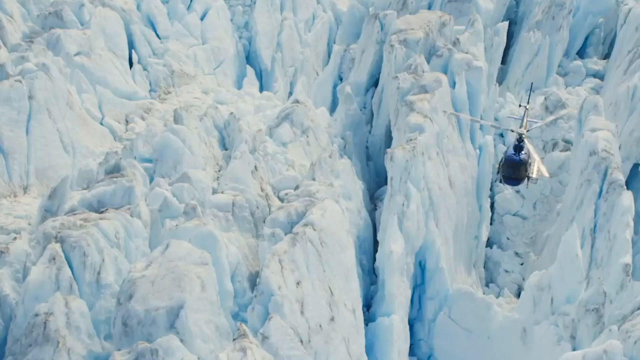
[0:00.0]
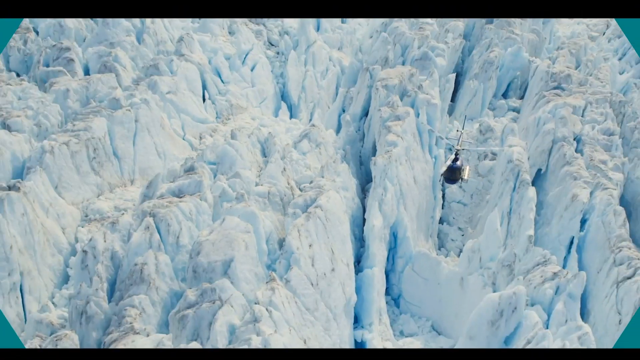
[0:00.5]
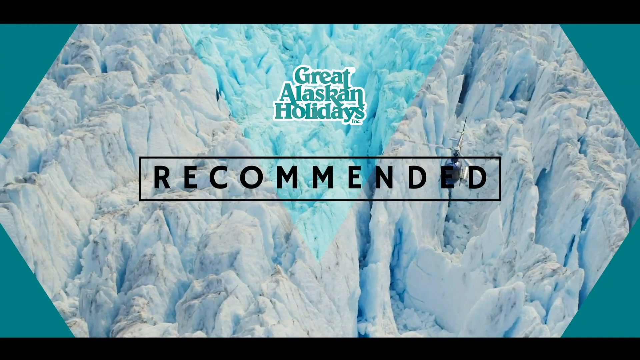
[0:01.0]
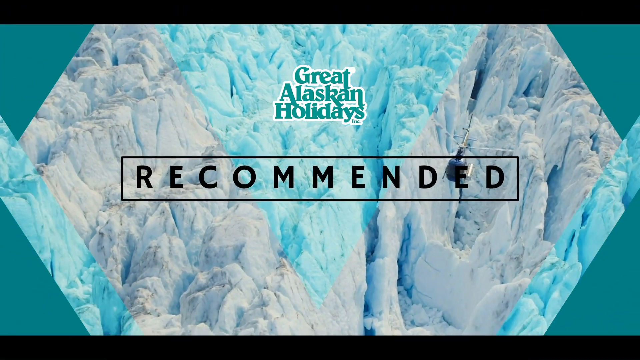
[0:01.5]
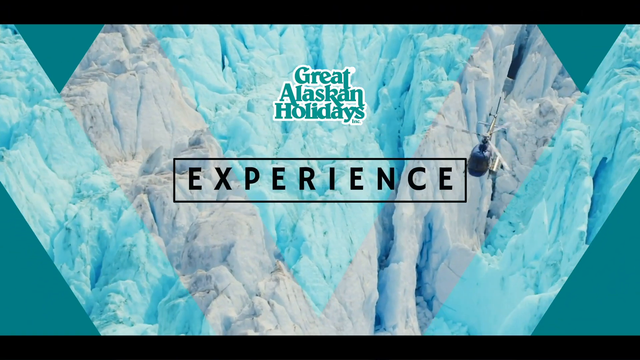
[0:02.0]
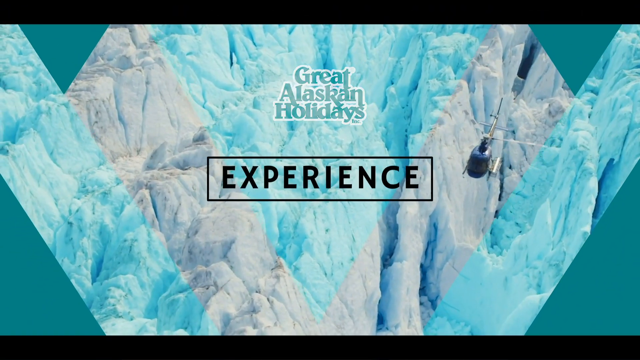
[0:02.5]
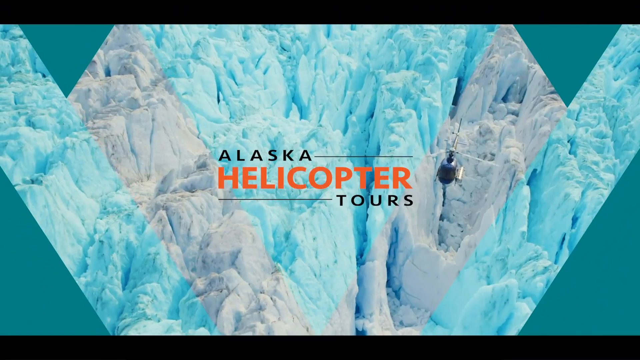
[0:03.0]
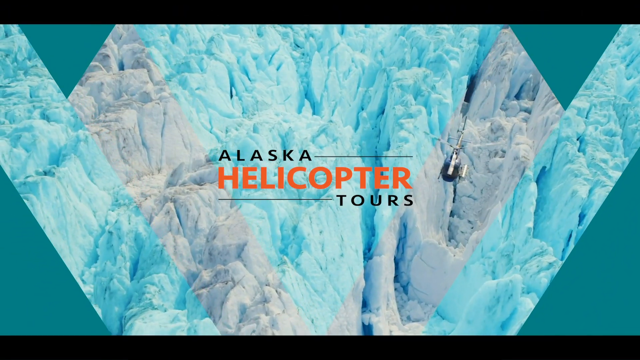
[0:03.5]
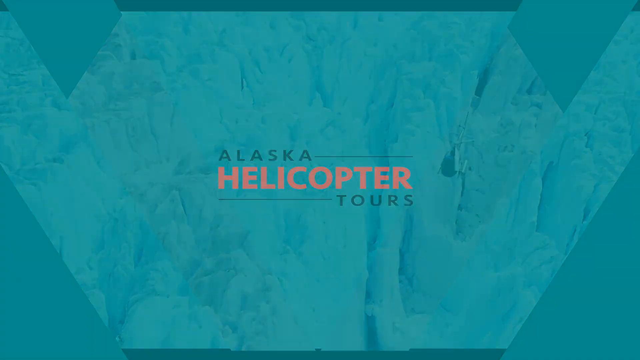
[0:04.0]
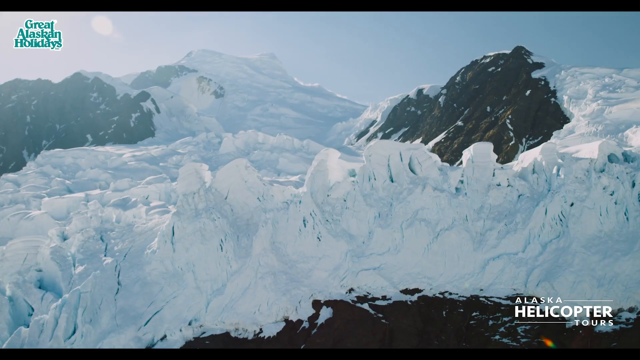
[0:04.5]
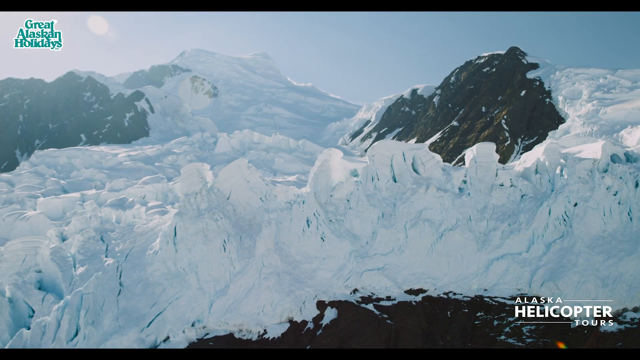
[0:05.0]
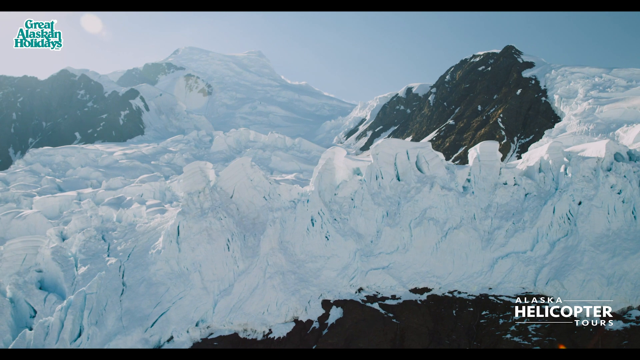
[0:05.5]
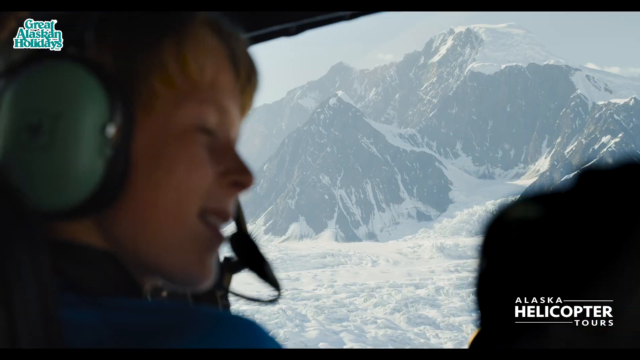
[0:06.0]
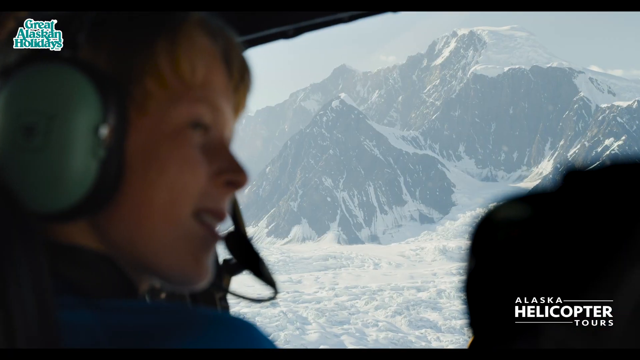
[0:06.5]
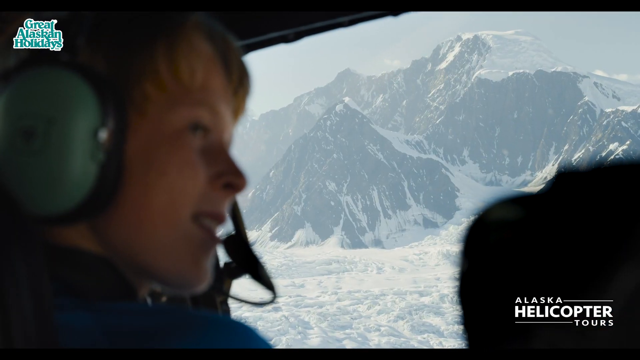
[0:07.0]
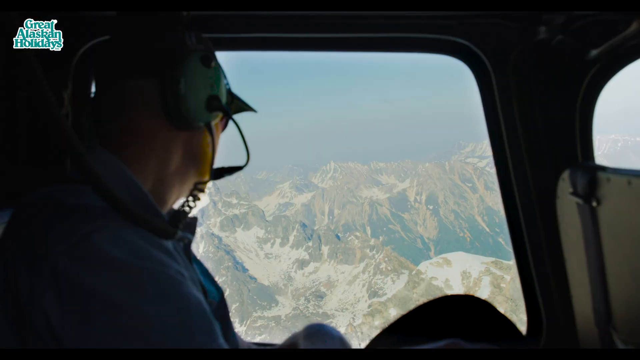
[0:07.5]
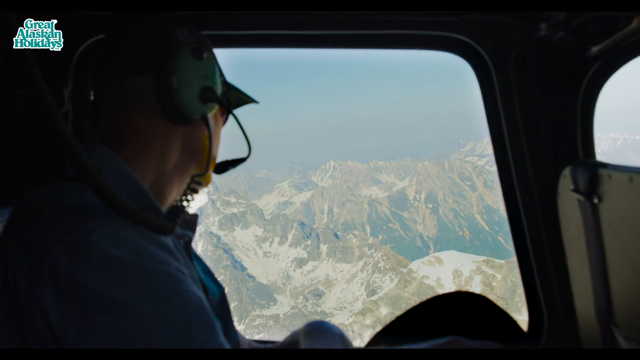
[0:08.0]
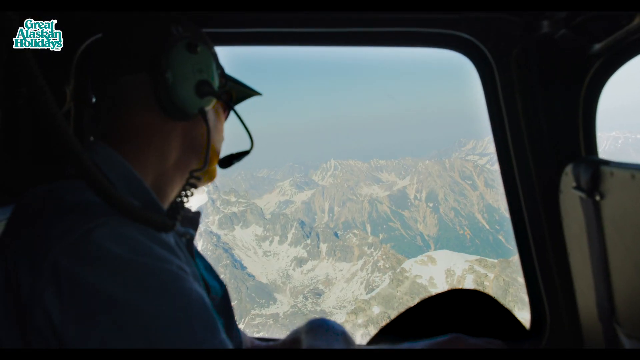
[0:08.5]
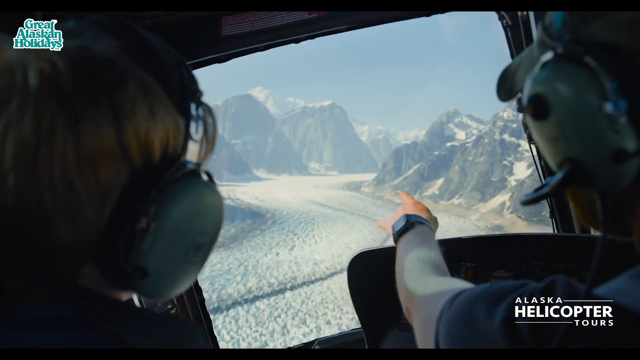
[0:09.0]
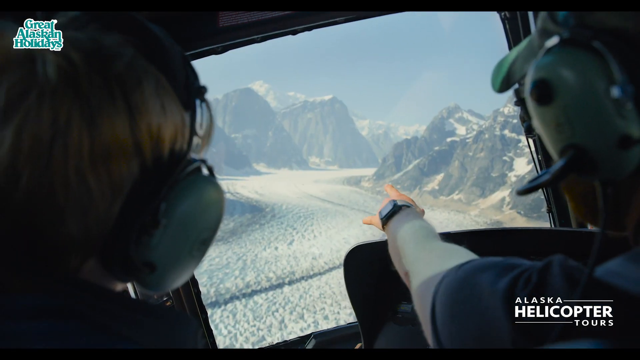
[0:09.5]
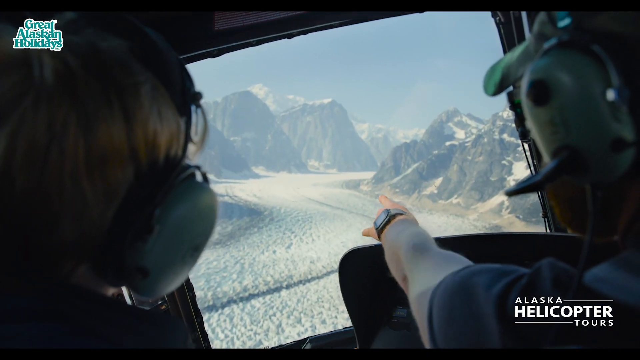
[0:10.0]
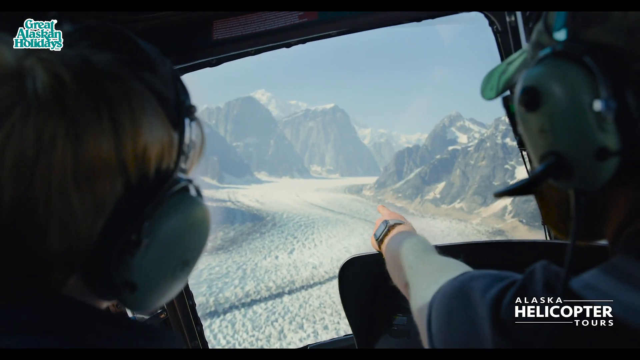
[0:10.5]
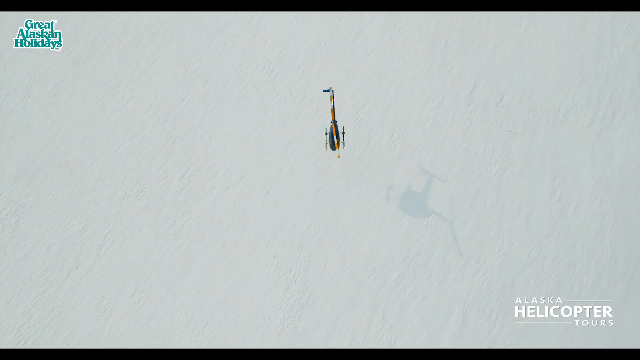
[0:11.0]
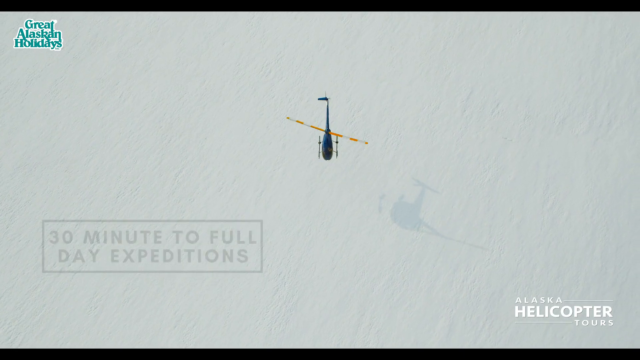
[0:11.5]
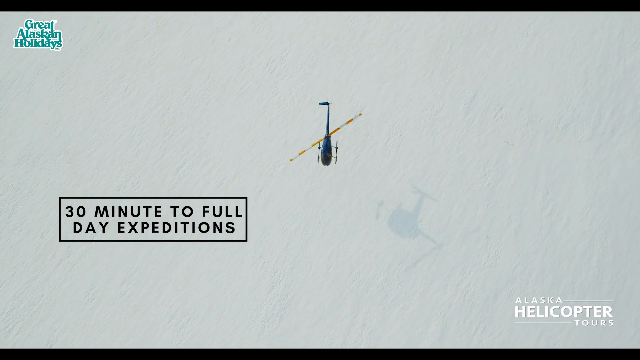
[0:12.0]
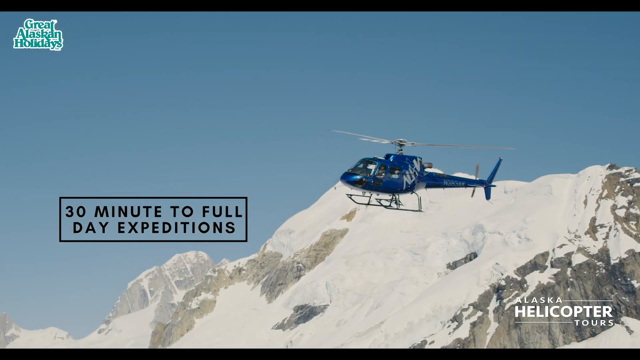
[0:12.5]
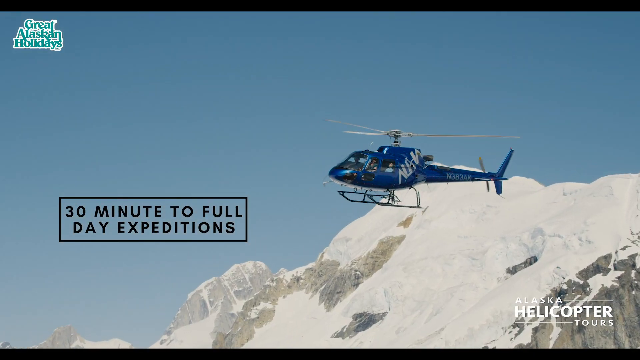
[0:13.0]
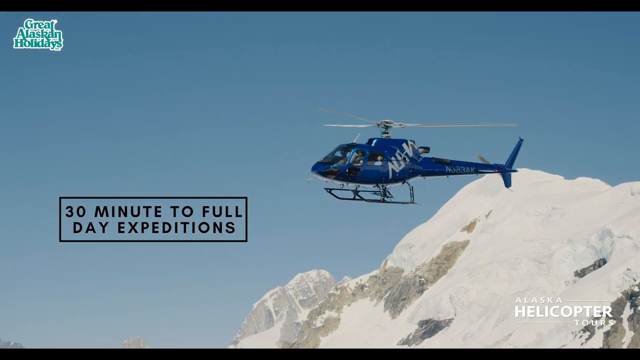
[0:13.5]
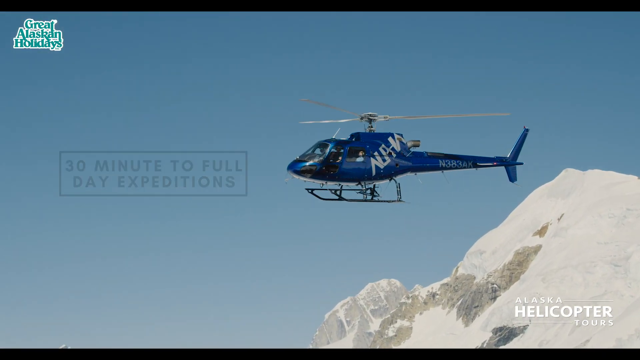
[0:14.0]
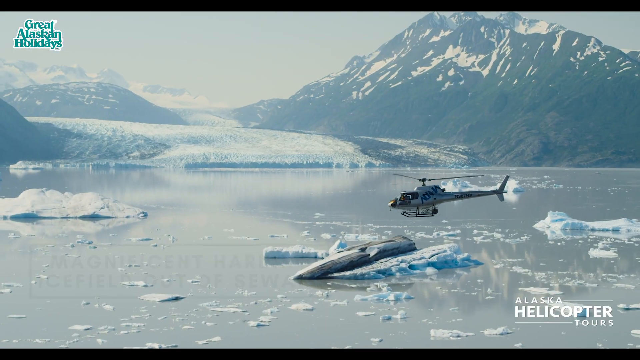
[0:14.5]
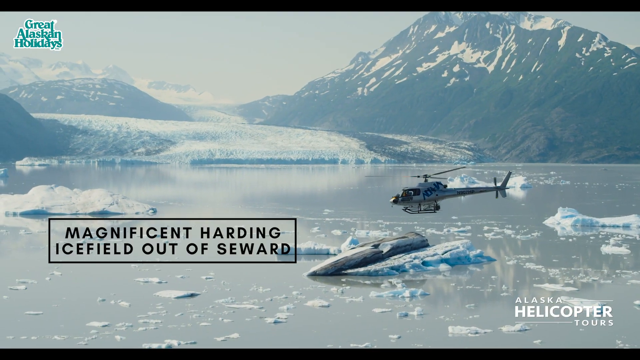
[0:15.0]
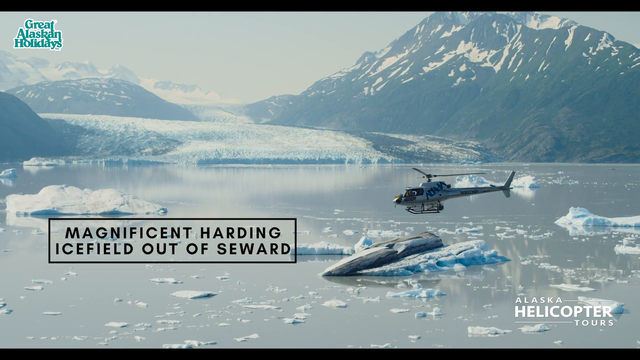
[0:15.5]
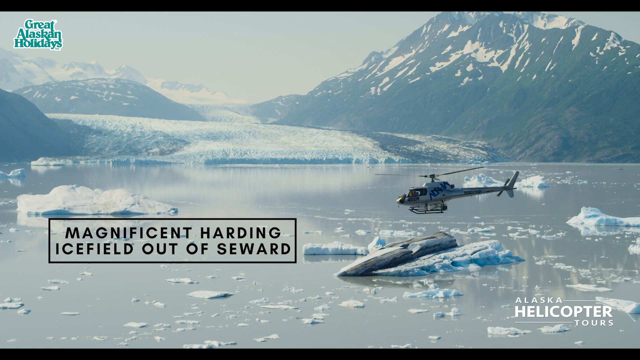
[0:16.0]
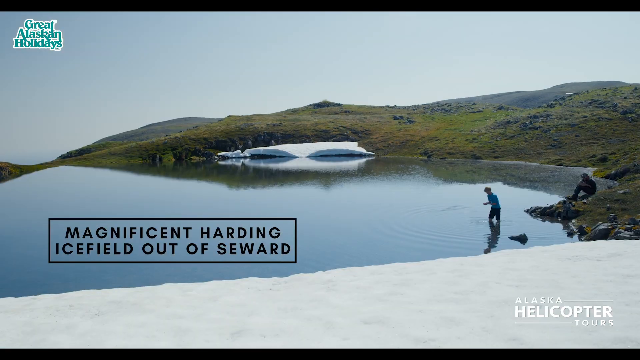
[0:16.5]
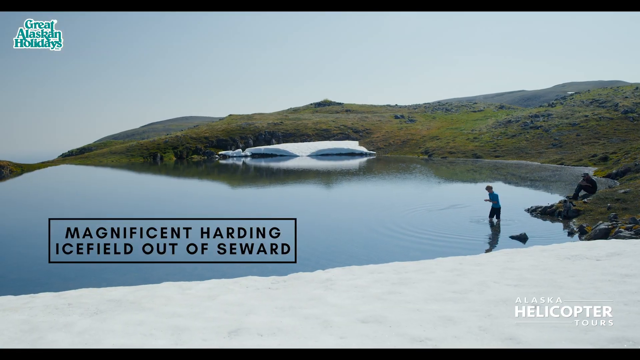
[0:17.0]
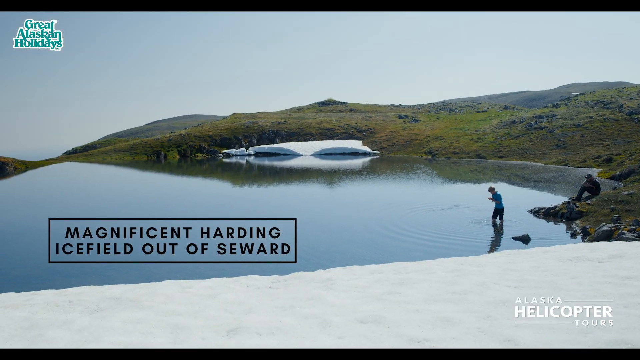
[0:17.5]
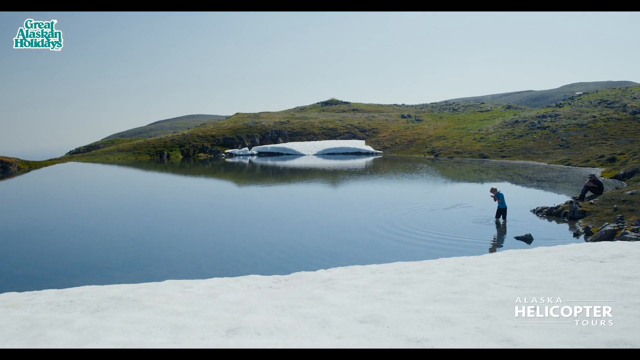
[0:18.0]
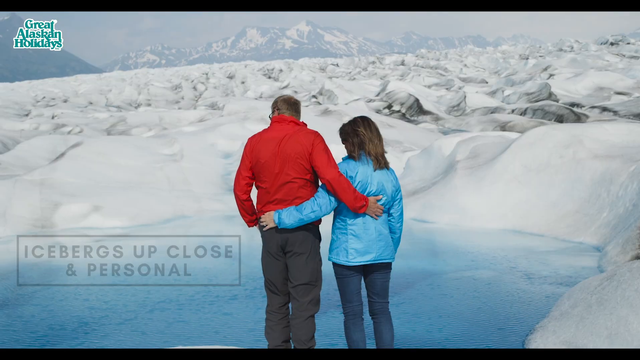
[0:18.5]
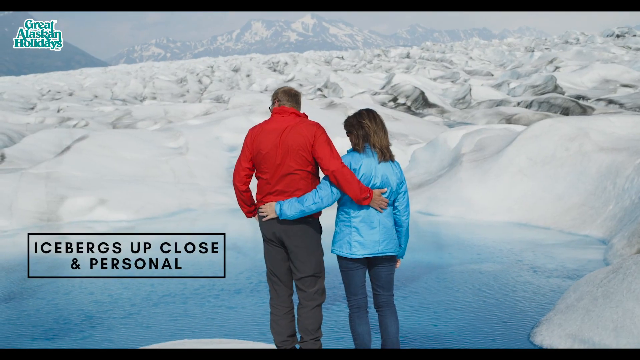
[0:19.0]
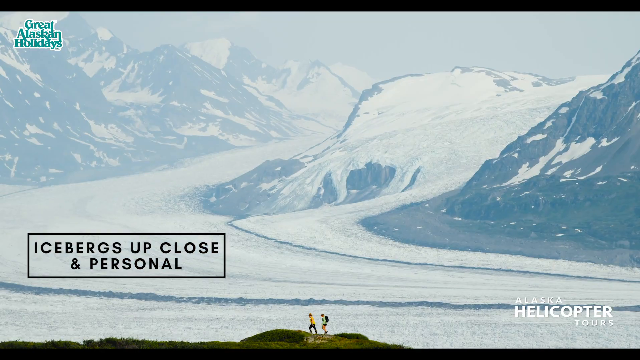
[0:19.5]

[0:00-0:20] The video opens on a snowy landscape, possibly a glacier, with a helicopter in the bottom right. The words "Great Alaskan Holidays" appear on the screen in green, and the word "experience" appears in the centre of the screen. "Experience" contracts as it is shown and is replaced by the words "Alaska Helicopter Tours". The helicopter moves to the right of the screen with its rotors moving, and the screen fades to a greenish blue colour before switching to a view of the snow. A drone shot shows the edges of the mountain. Inside a helicopter, a person wearing a headset looks out at a snowy mountainscape, and the pilot gestures to the travellers. A box appears on the left-hand side of the screen reading "30 minute to full day expeditions". The helicopter travels from right to left across the screen. In the following shot the helicopter travels over a lake, moving from right to left while the camera moves with it so that the helicopter stays in the same spot on the screen.